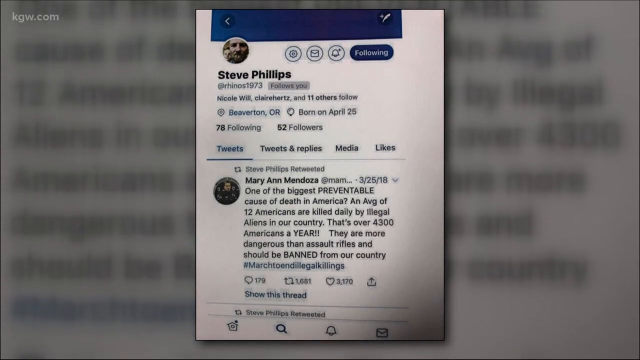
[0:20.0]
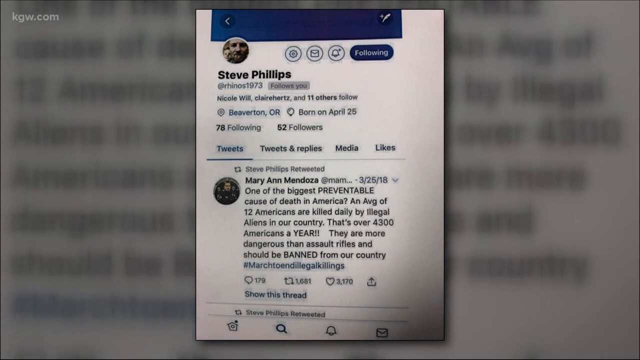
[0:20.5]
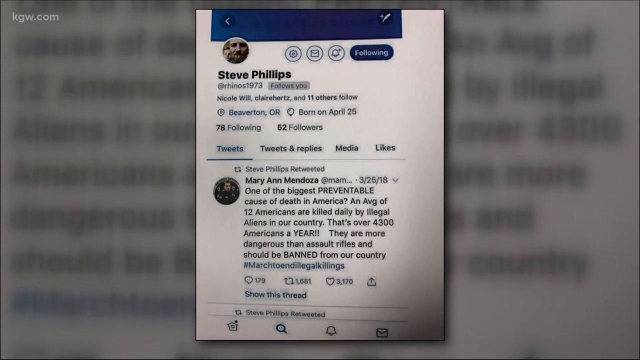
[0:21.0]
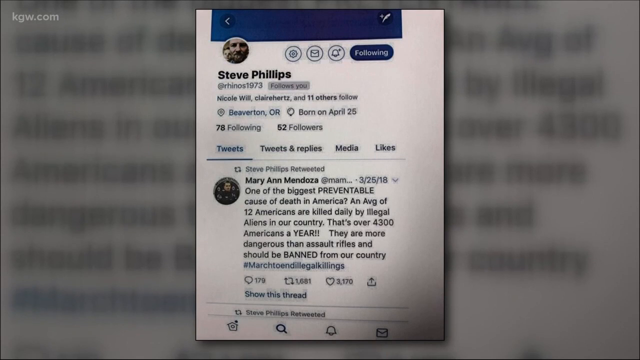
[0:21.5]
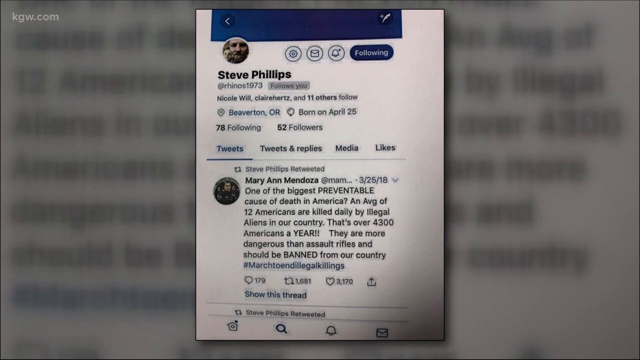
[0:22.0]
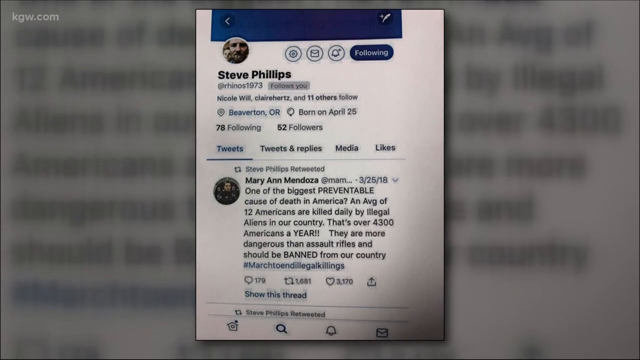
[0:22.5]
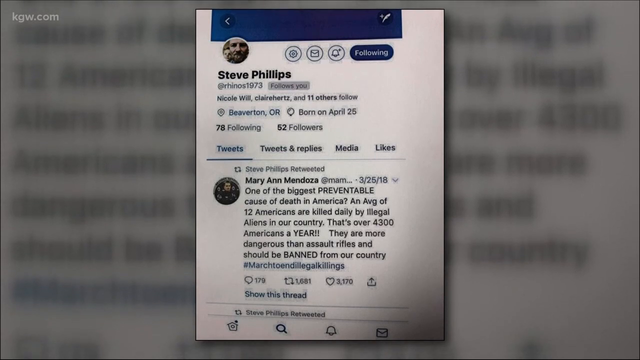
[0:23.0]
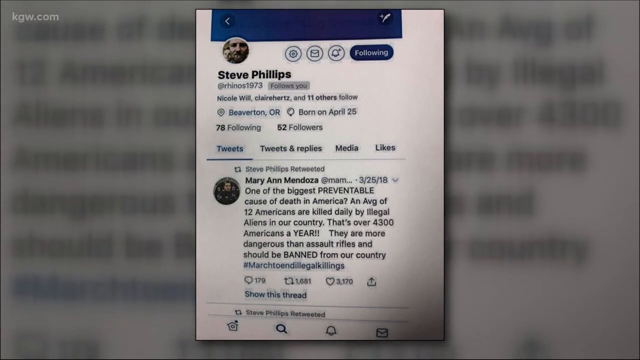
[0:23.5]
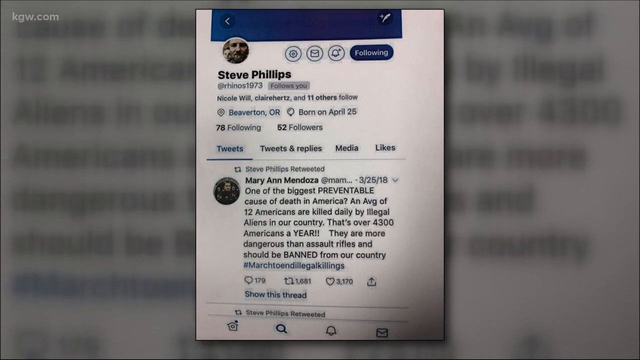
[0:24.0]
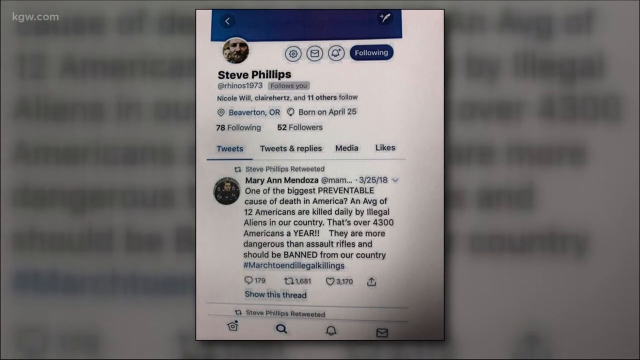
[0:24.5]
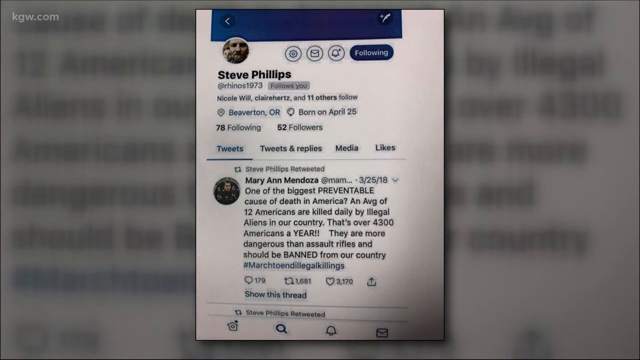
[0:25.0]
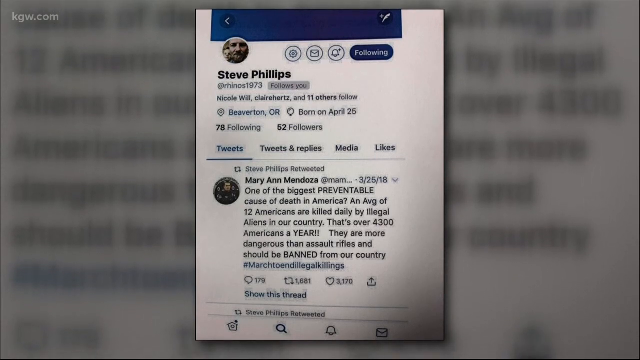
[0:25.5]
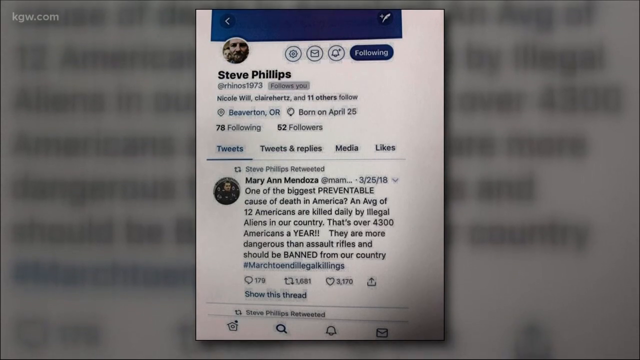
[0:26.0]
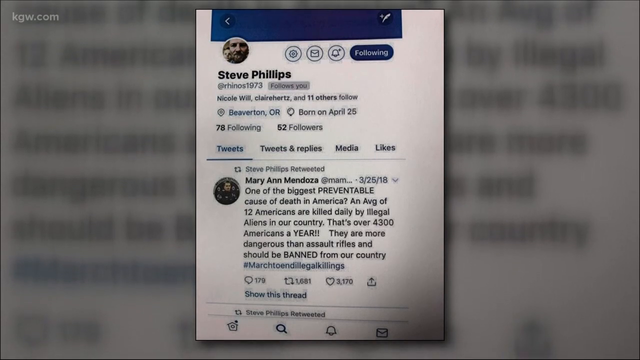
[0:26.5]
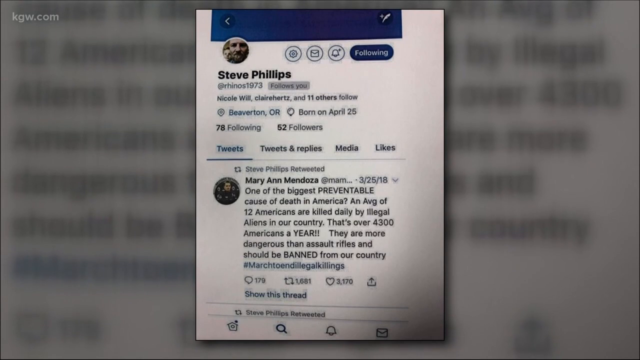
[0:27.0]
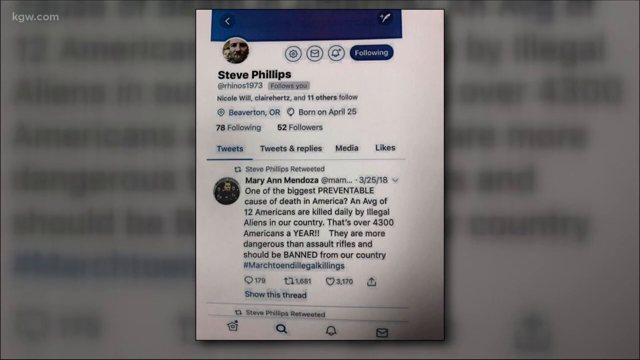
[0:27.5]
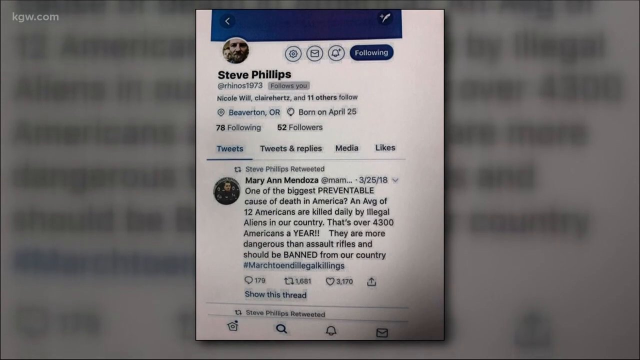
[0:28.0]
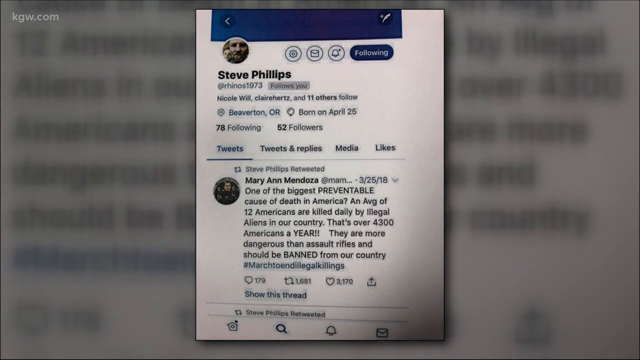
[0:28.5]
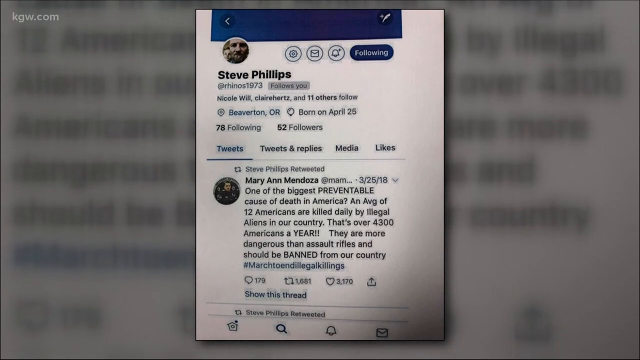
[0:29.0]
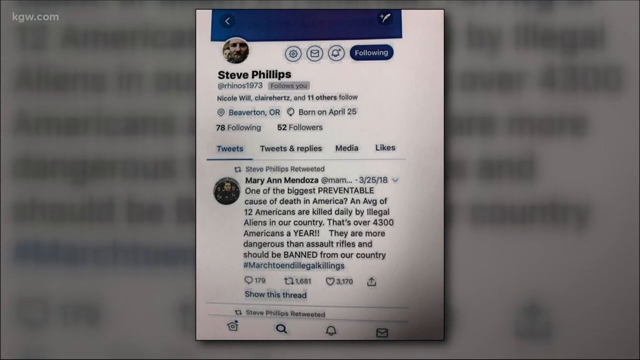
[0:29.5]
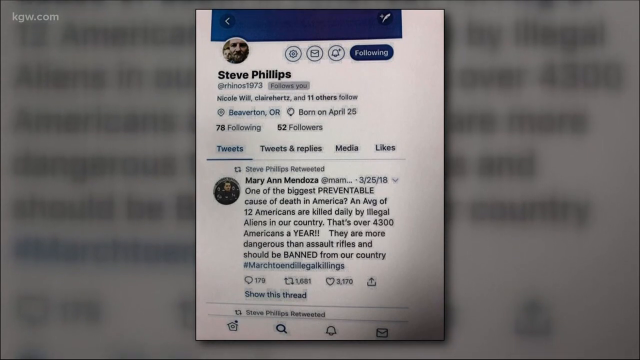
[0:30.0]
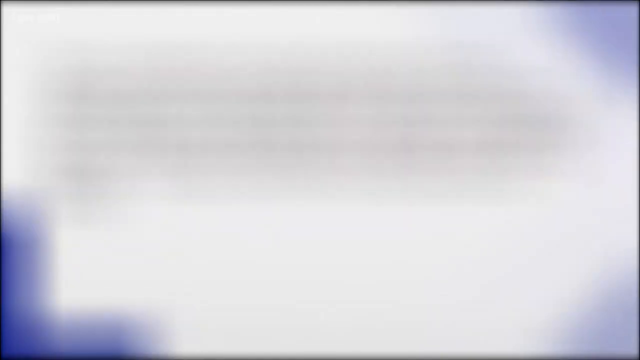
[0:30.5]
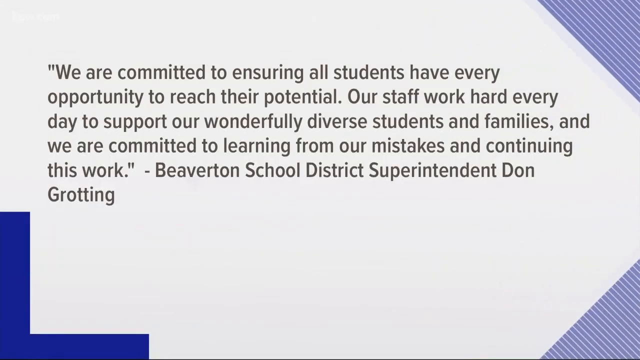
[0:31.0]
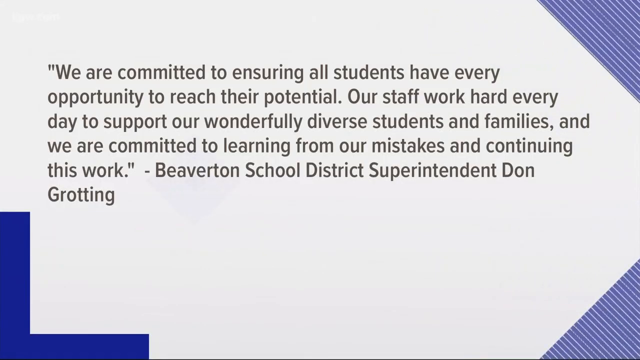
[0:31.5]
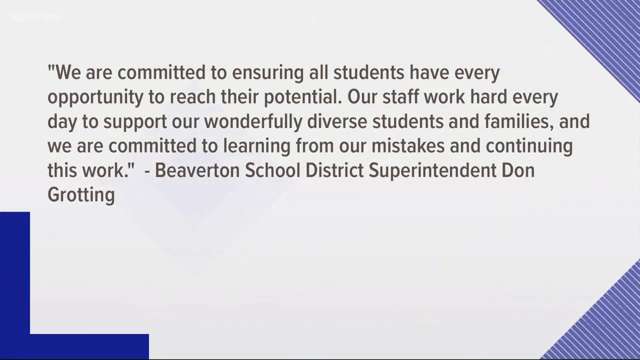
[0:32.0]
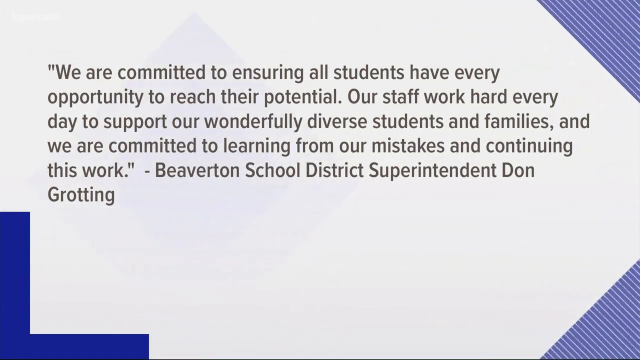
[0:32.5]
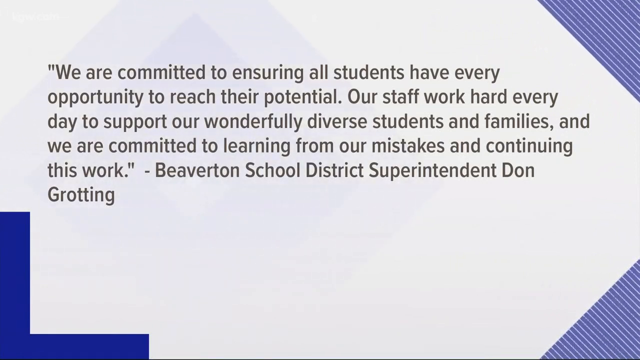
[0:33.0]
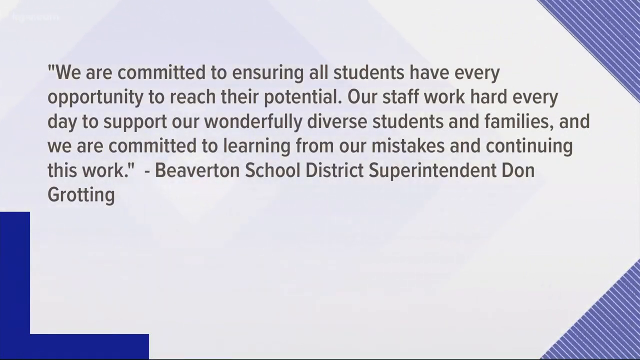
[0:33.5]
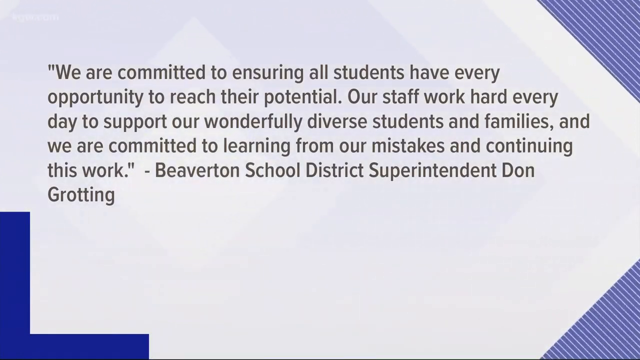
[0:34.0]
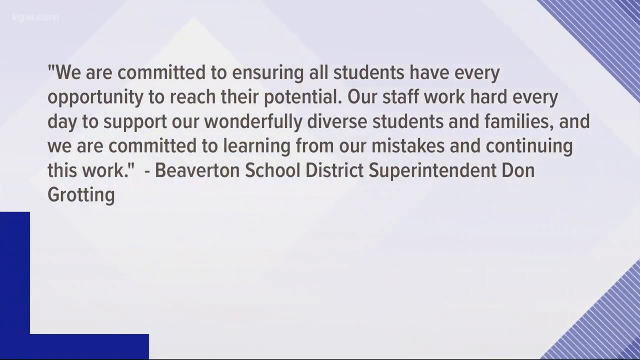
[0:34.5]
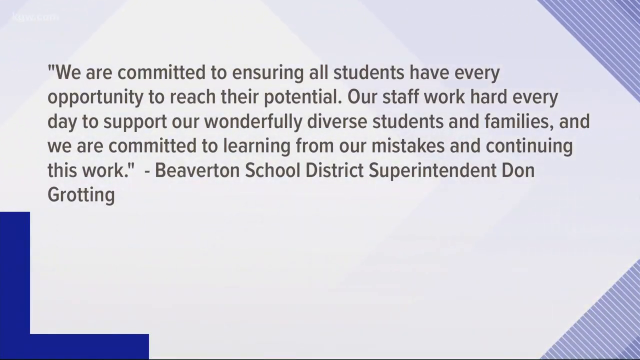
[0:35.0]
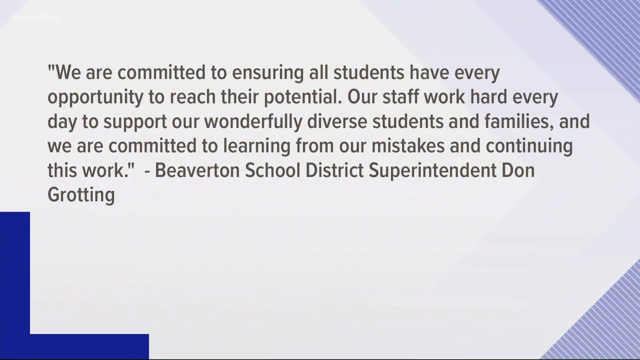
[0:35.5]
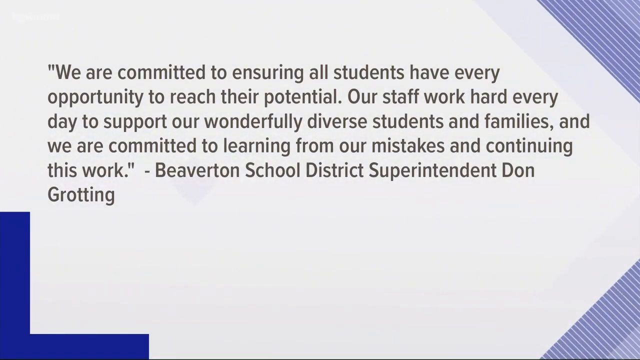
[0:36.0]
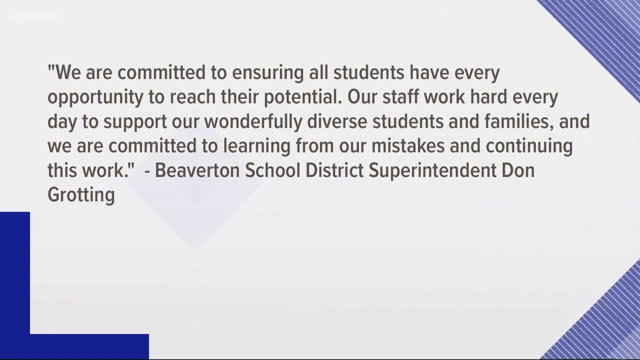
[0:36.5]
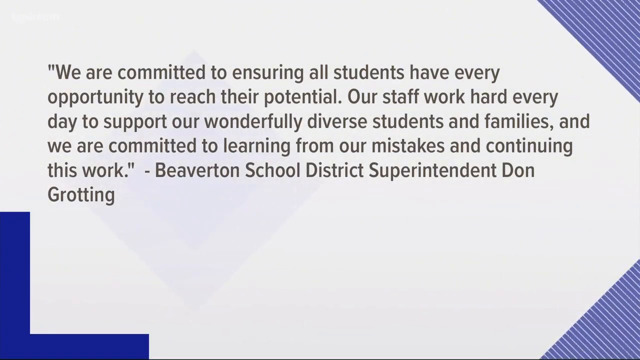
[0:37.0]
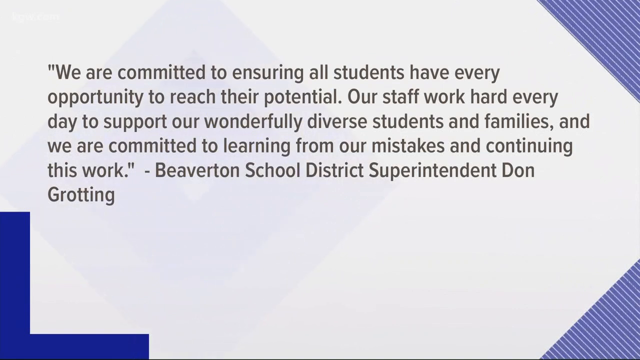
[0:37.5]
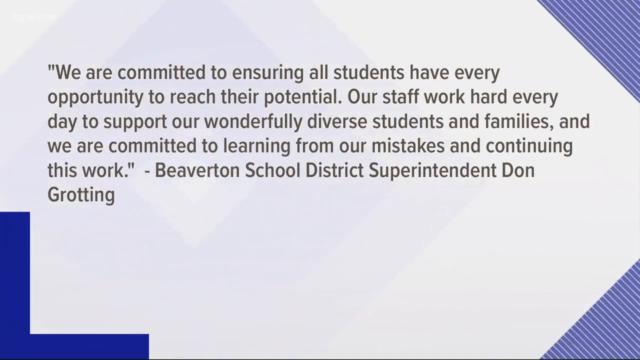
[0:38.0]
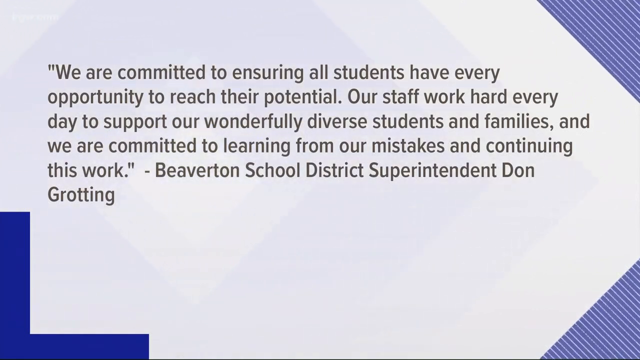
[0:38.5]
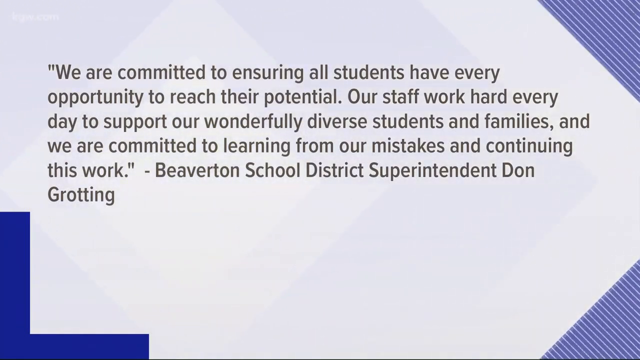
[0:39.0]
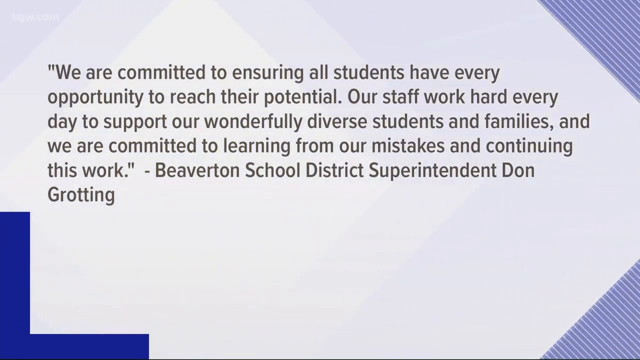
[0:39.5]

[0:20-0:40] Steve Phillips' Twitter page is shown, listing him as from Beaverton, Oregon, with 78 followers. The follow button is dark blue, and a blue ribbon lines the top of the Twitter page. There is a retweet from Mary Ann Mendoza that says "one of the biggest preventable causes of death in America. An average of 12 Americans have died daily by illegal immigrants." Steve Phillips' Twitter bio lists a position working for the Beaverton School District. Then a statement appears from Beaverton School District Superintendent Don Grouting that says "we are committed to ensuring that all students have every opportunity to reach their potential. Our staff work hard every day to support our wonderfully diverse students and families. And we are committed to learning from our mistakes and continuing this work."